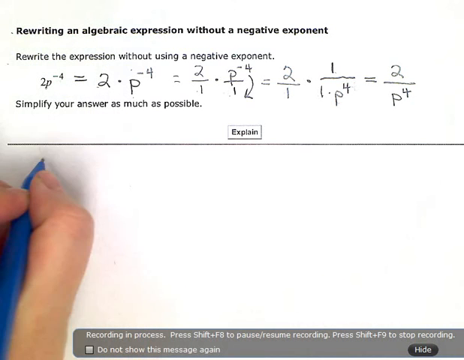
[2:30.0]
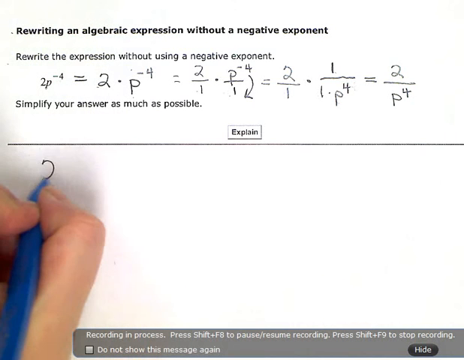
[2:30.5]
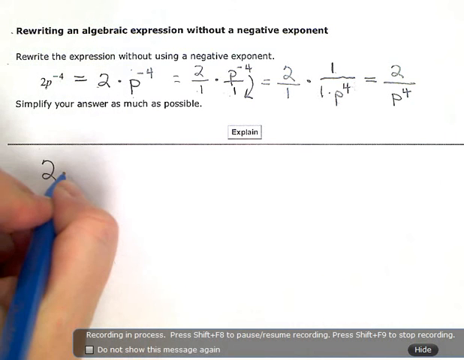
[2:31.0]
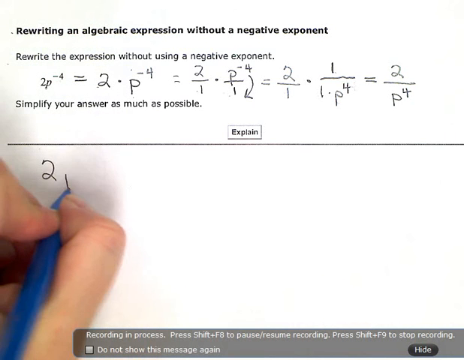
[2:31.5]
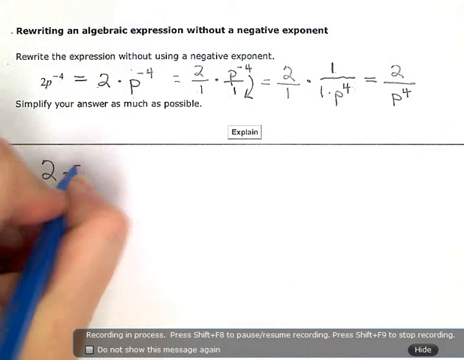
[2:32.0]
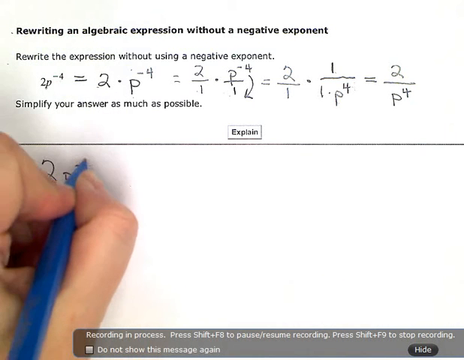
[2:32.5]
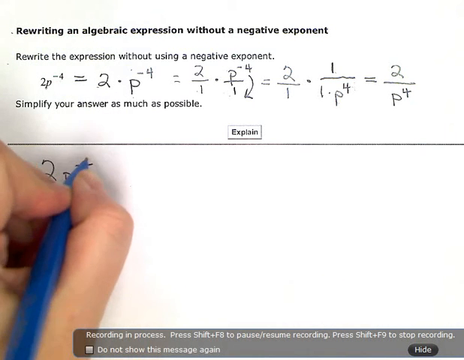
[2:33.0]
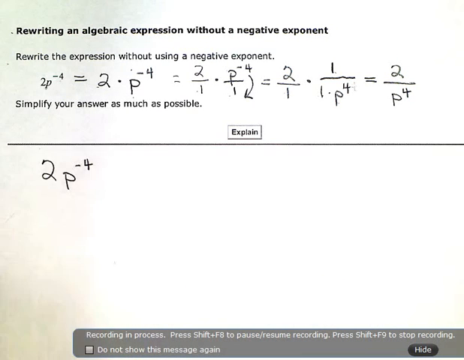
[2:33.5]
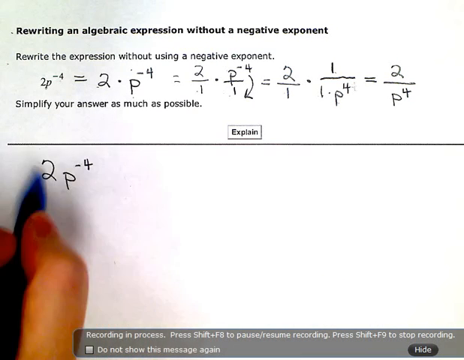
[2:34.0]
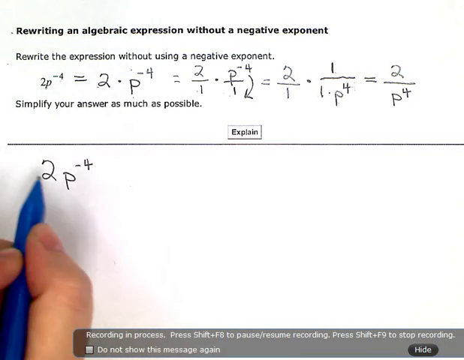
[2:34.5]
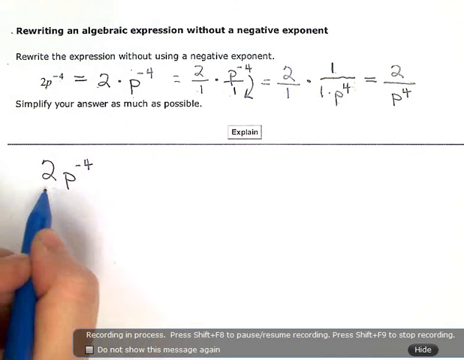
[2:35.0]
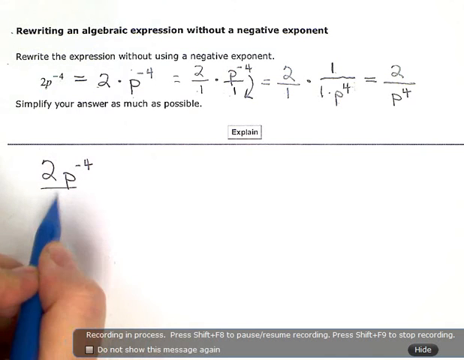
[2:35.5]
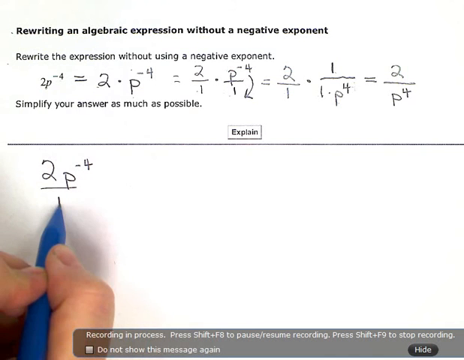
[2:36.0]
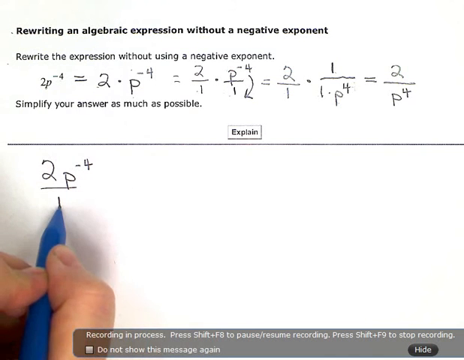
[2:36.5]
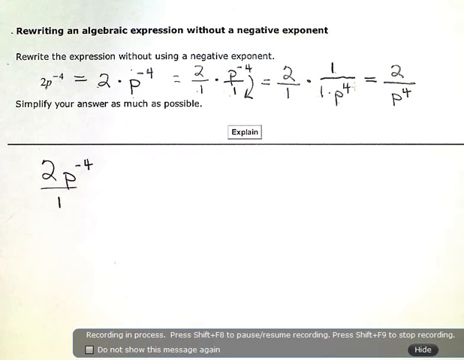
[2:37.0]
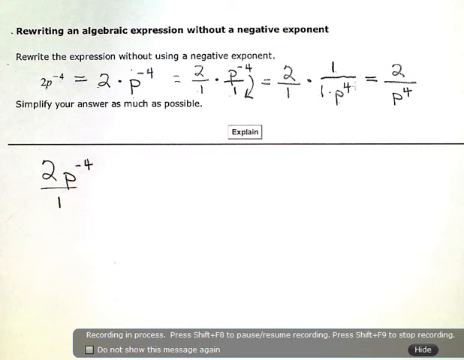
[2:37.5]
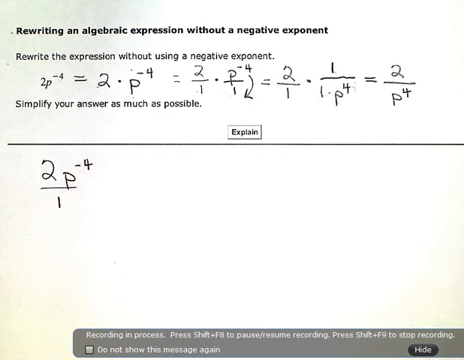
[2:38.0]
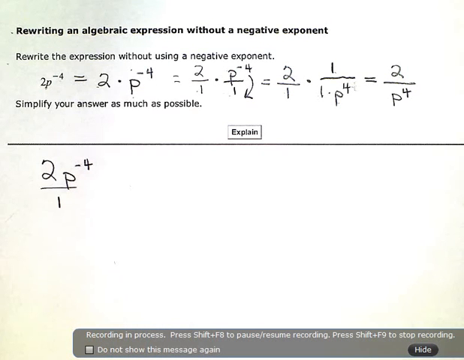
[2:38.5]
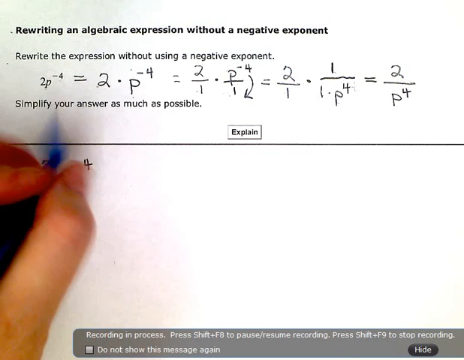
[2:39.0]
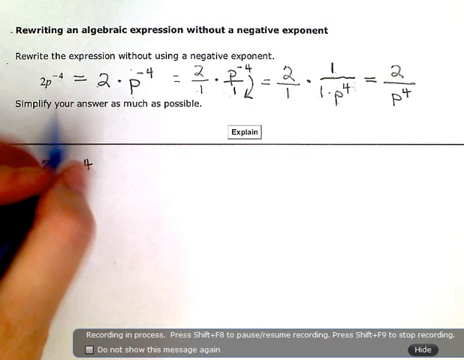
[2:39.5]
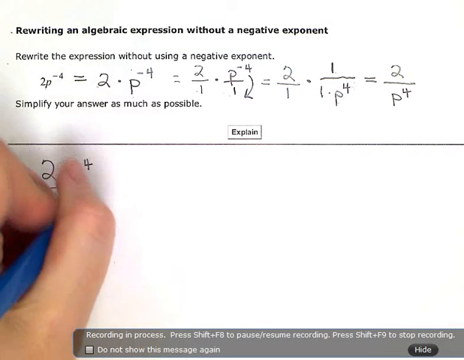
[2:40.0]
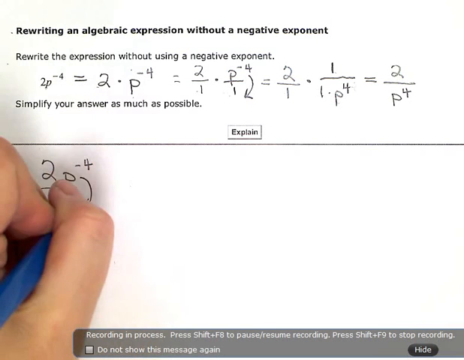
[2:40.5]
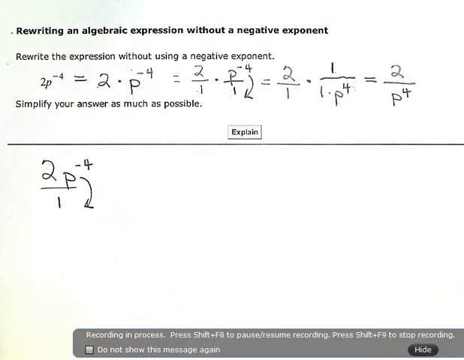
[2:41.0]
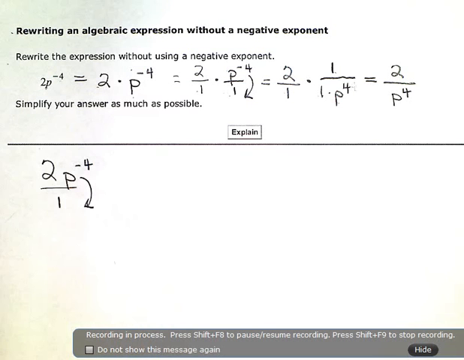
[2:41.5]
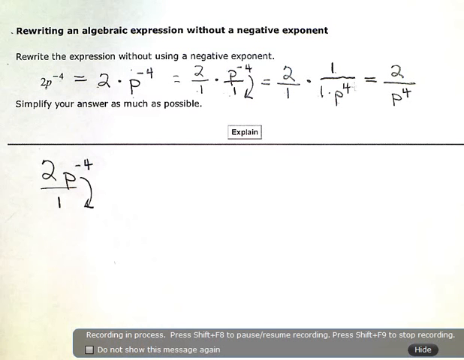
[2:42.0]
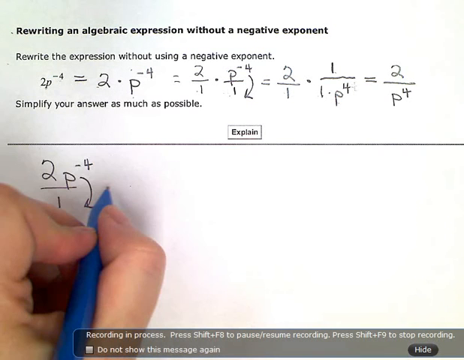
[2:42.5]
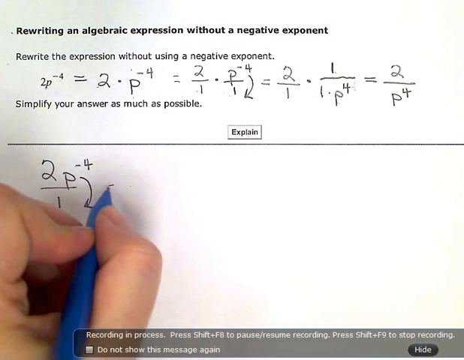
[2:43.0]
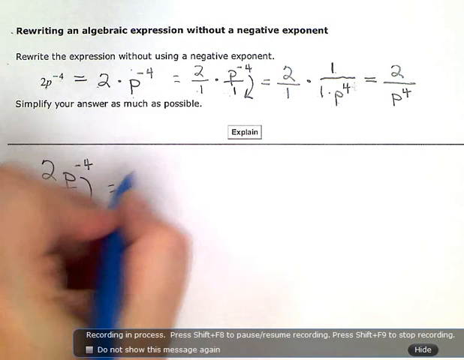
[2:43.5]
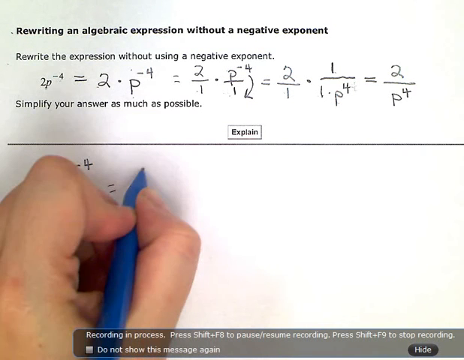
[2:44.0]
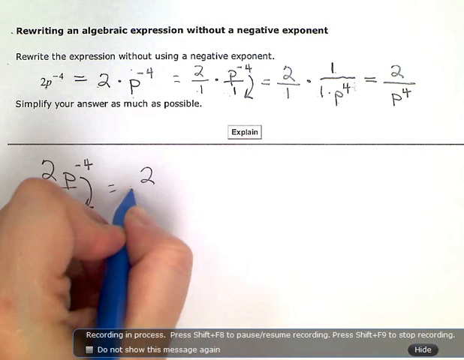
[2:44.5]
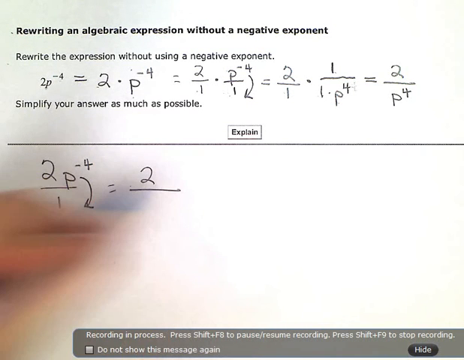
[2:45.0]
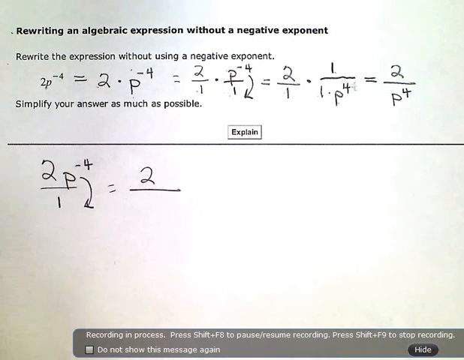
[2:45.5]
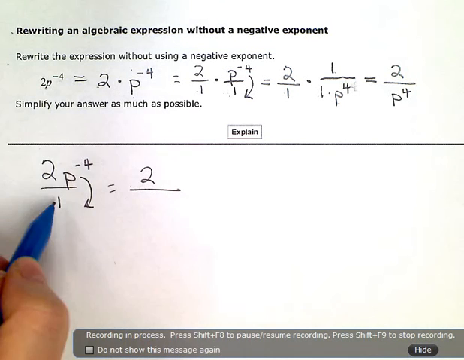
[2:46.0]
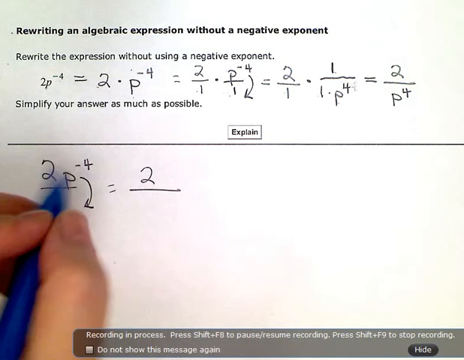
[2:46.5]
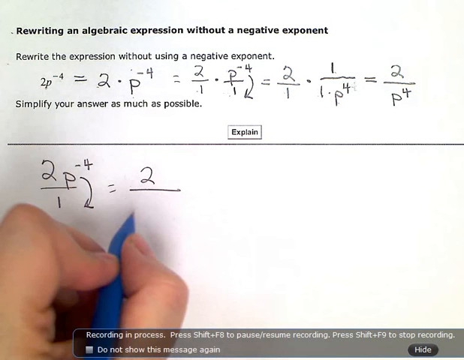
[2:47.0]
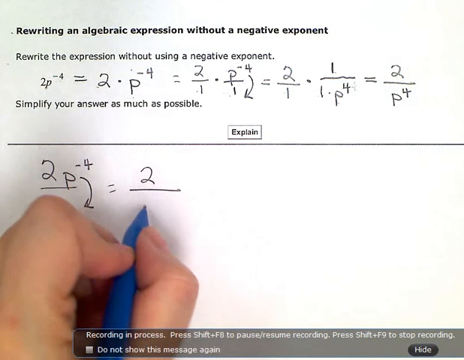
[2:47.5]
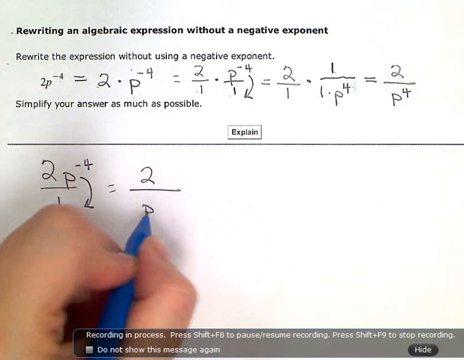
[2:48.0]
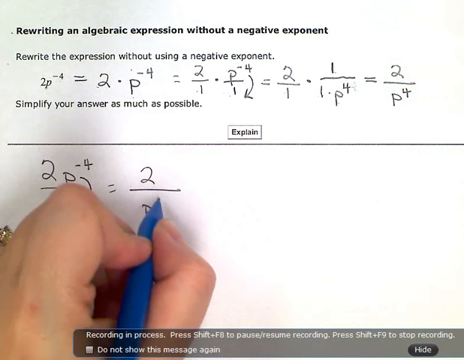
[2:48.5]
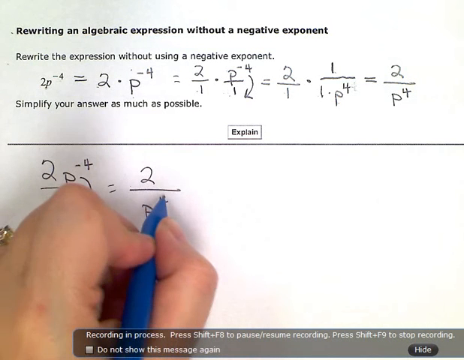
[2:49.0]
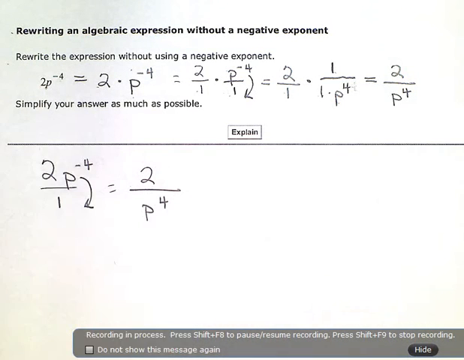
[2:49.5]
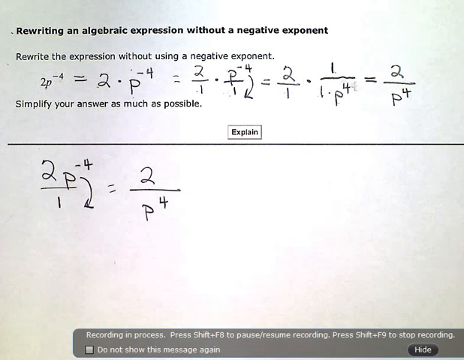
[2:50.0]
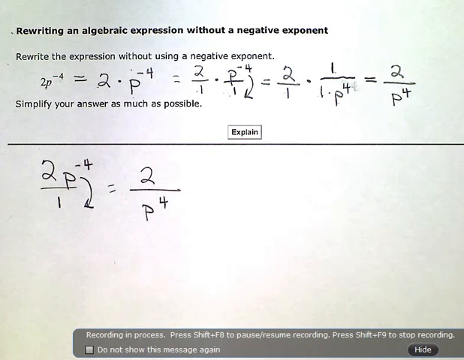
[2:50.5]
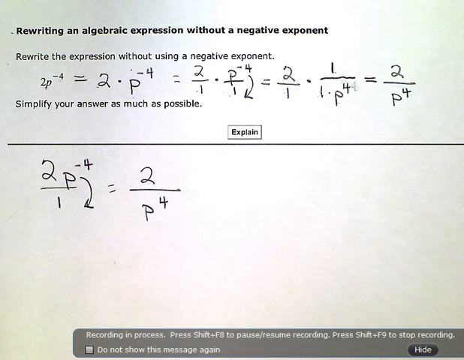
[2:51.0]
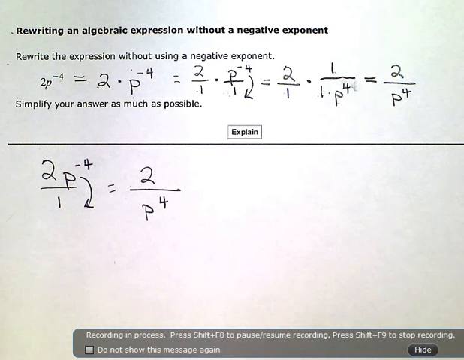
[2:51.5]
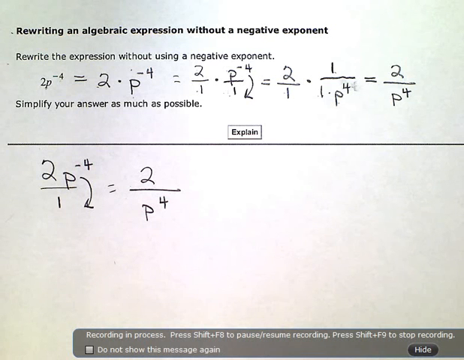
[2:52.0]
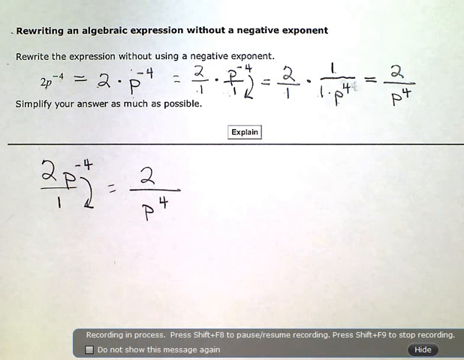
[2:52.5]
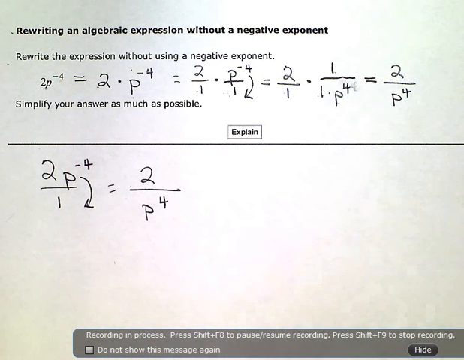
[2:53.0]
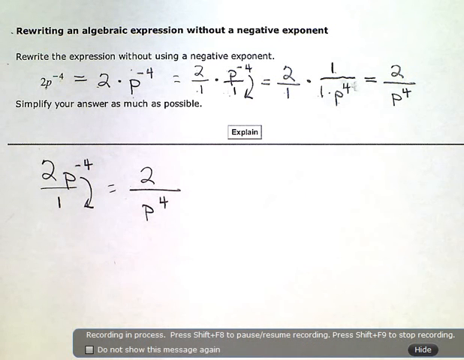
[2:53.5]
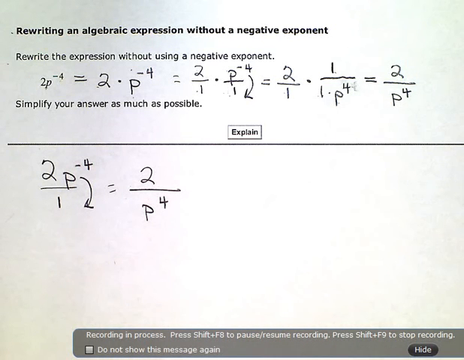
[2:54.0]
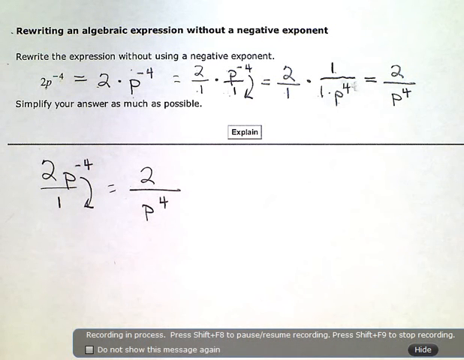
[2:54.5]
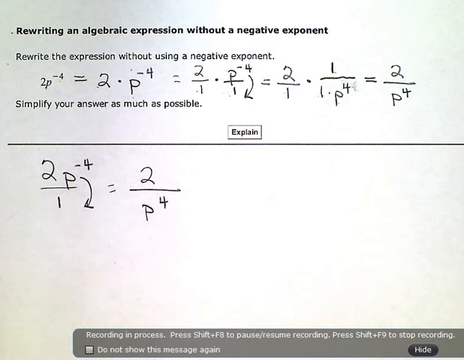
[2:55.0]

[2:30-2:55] A white screen with black borders on each side shows the text "rewriting an algebraic equation without a negative exponent" and, underneath, "rewrite the expression without using a negative exponent." Most of the problem has already been solved: 2P to the negative fourth equals 2 times P to the negative fourth, equals 2 over 1 times P over 1 to the negative fourth, equals 2 over 1 times 1 over 1 times P to the fourth, equals 2 over P to the fourth. The author uses his pen as a pointer as he goes along. At first he puts only the first part on the screen, then moves his hand out of the way before continuing.